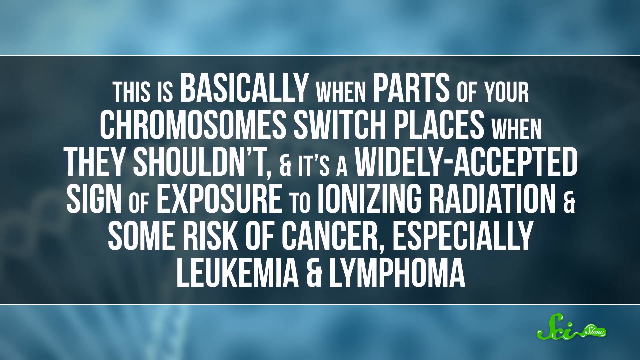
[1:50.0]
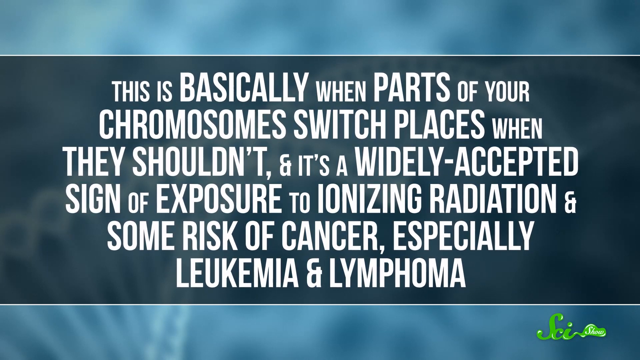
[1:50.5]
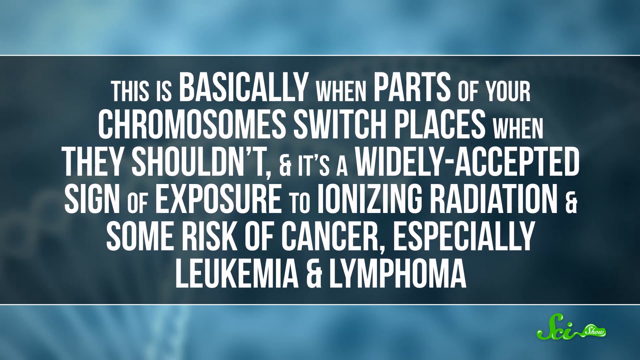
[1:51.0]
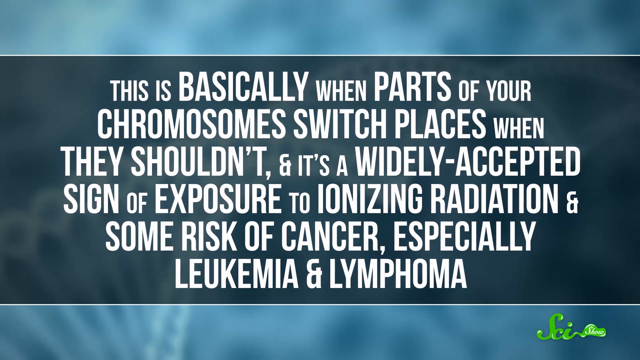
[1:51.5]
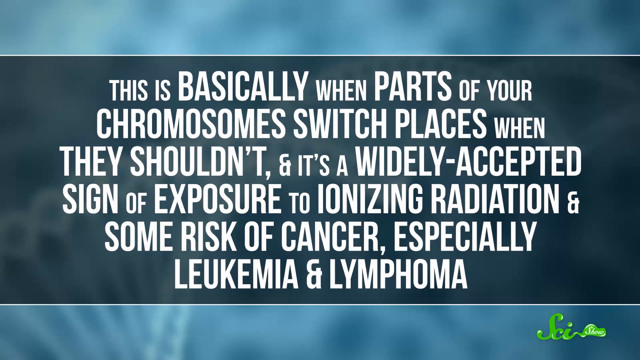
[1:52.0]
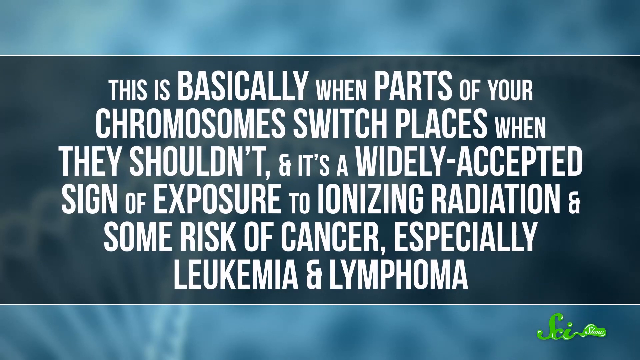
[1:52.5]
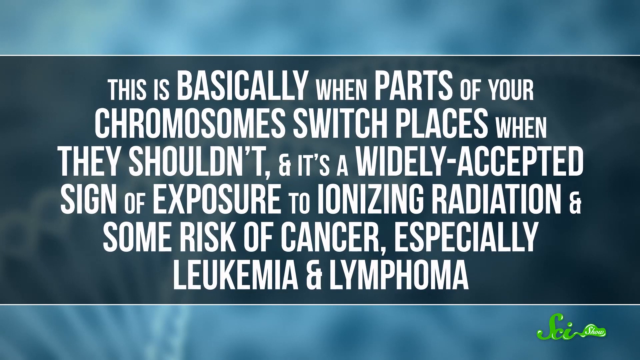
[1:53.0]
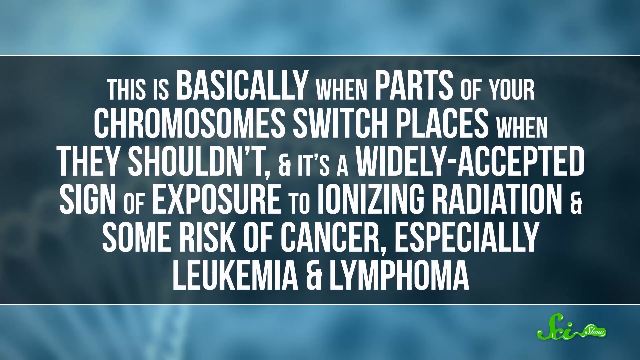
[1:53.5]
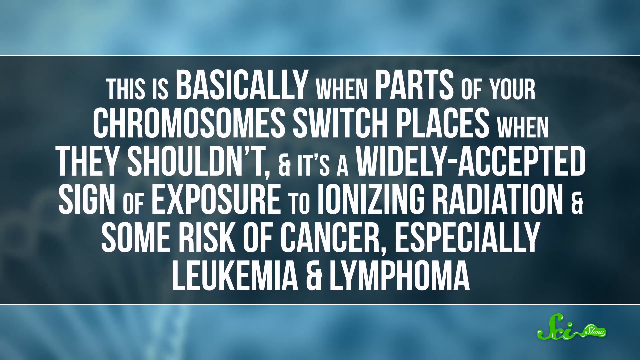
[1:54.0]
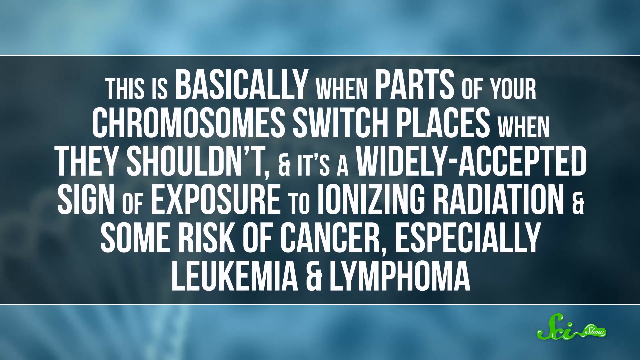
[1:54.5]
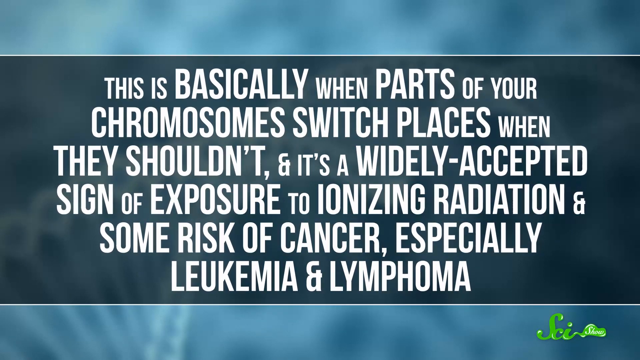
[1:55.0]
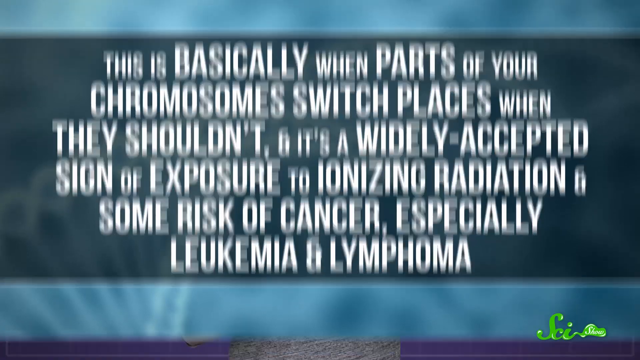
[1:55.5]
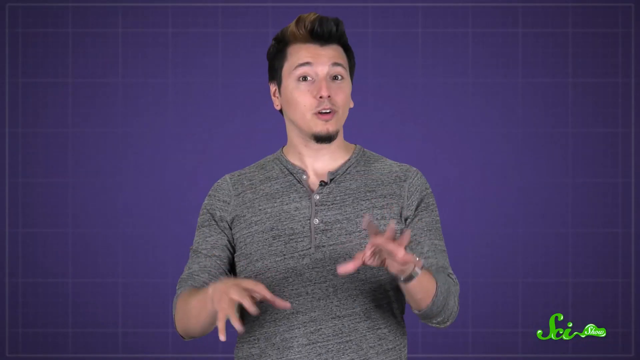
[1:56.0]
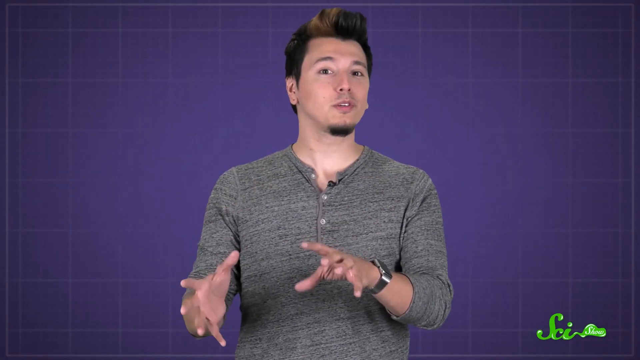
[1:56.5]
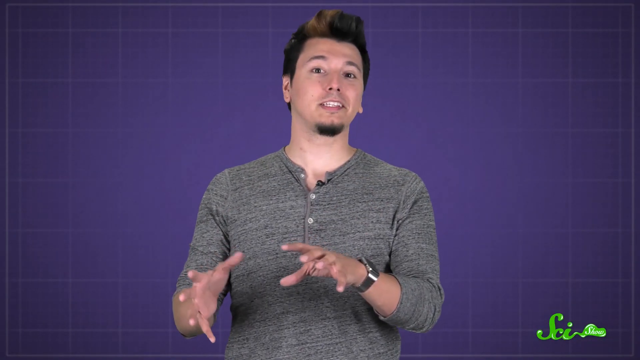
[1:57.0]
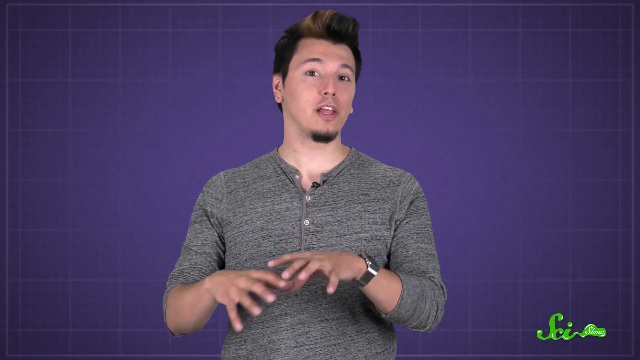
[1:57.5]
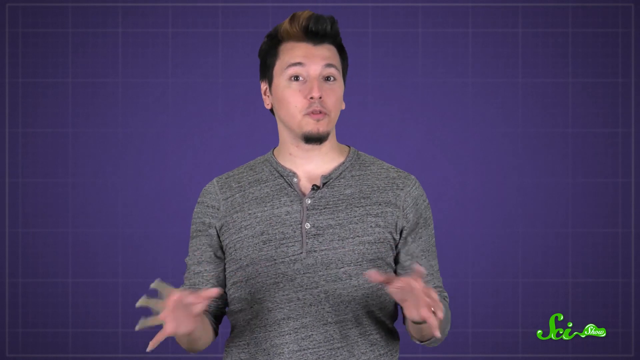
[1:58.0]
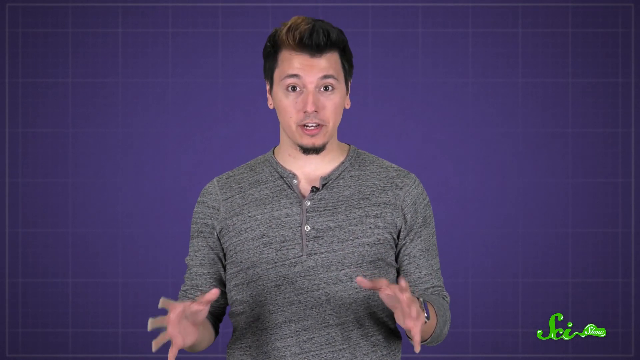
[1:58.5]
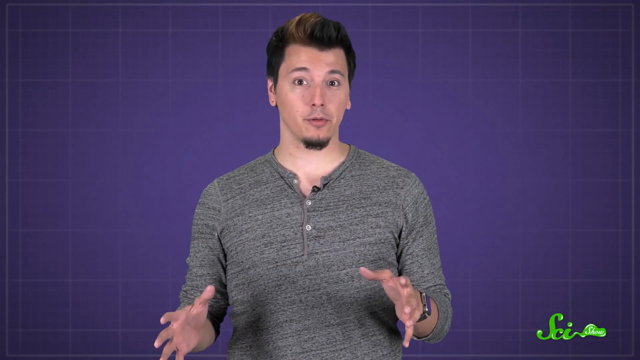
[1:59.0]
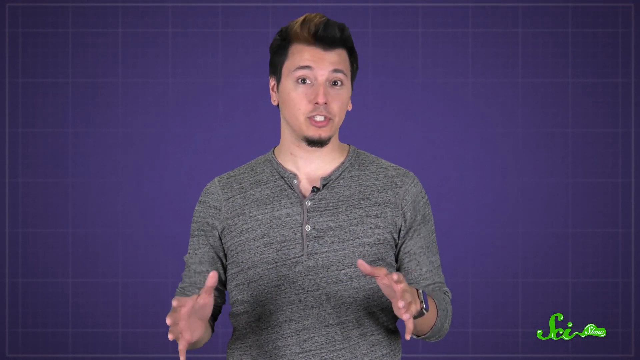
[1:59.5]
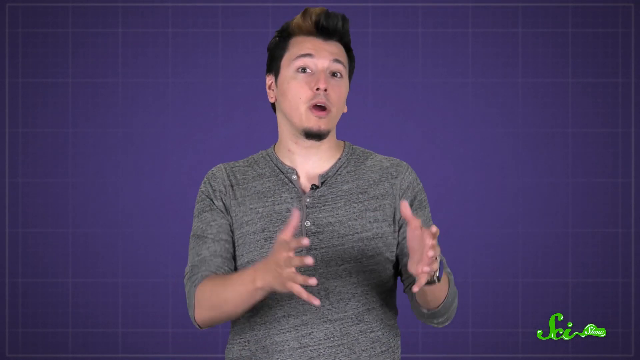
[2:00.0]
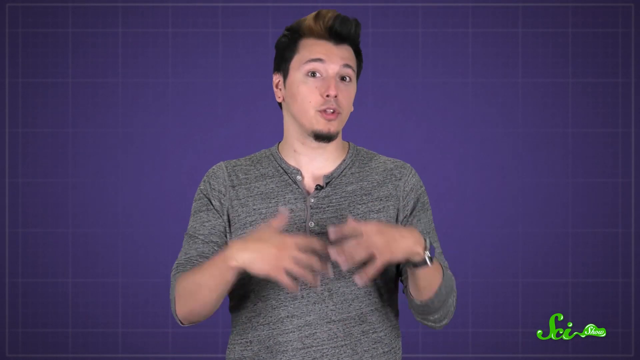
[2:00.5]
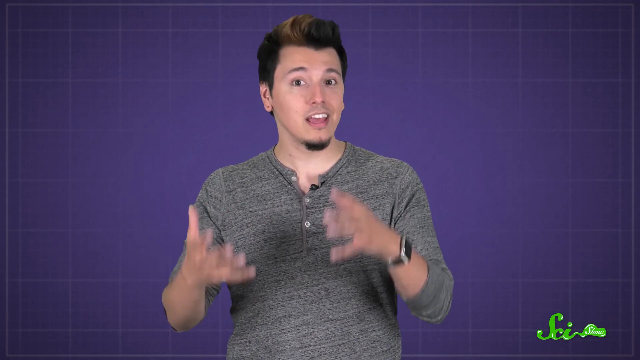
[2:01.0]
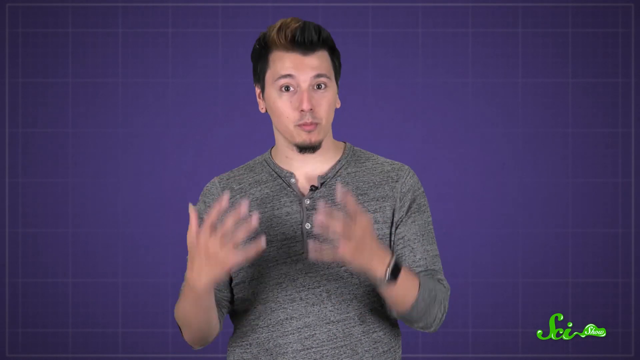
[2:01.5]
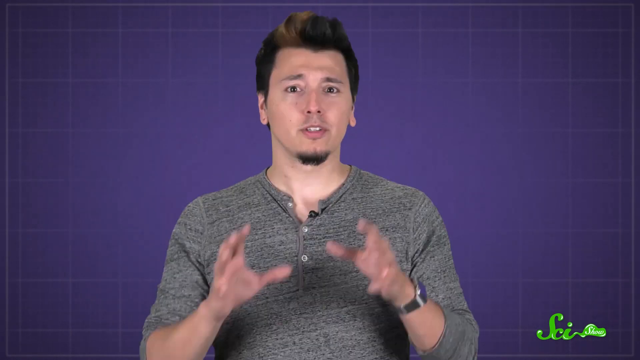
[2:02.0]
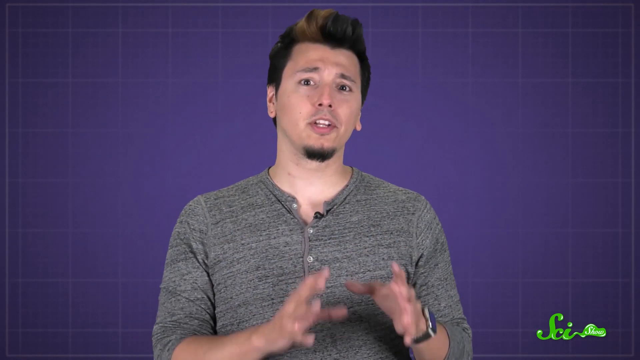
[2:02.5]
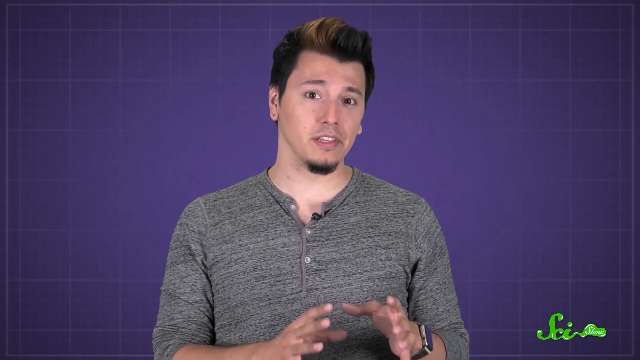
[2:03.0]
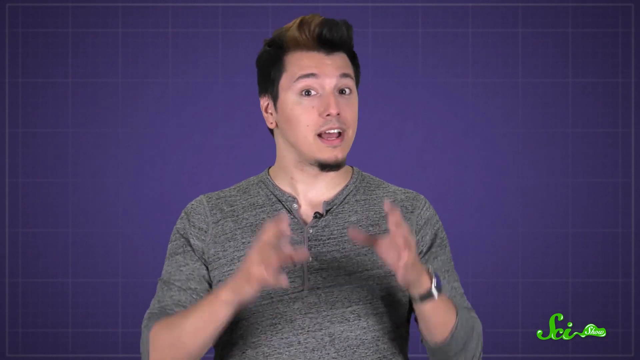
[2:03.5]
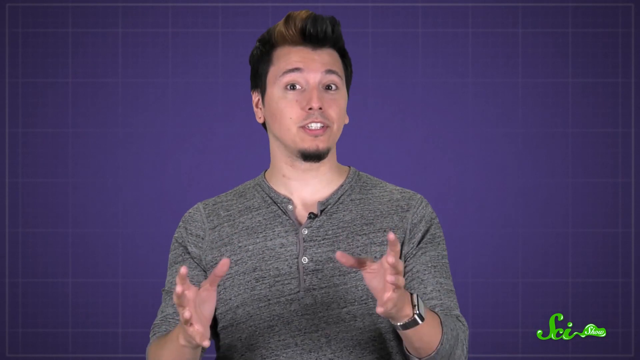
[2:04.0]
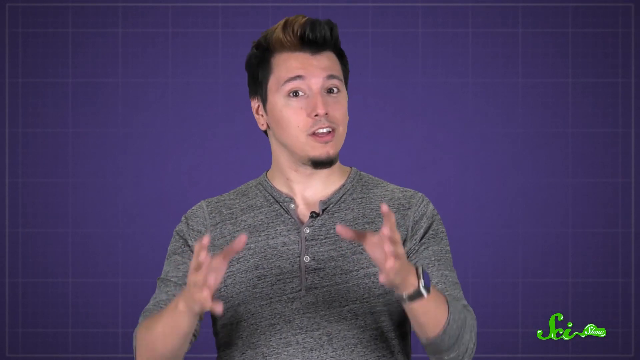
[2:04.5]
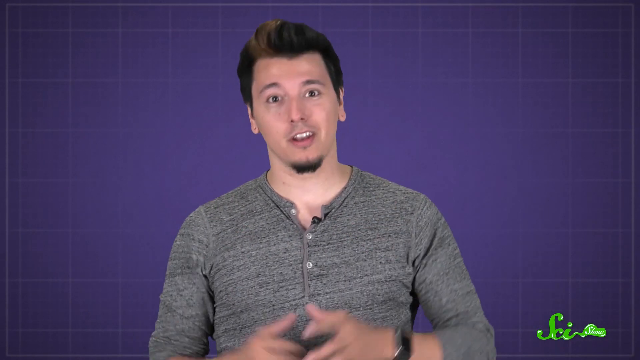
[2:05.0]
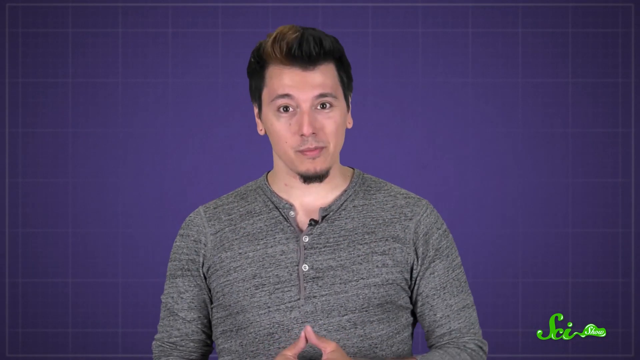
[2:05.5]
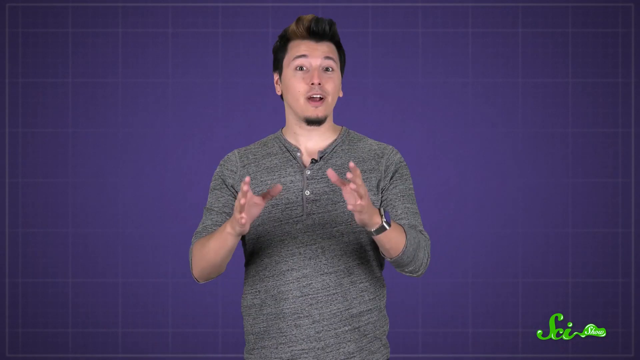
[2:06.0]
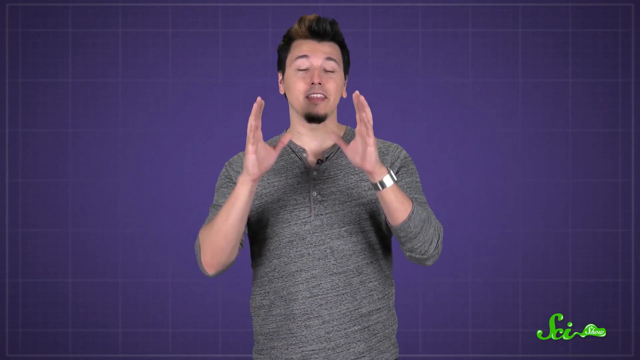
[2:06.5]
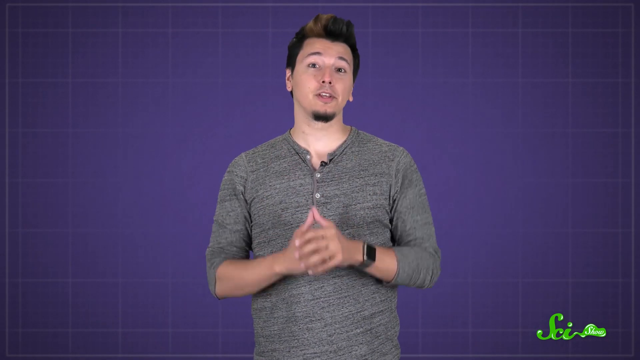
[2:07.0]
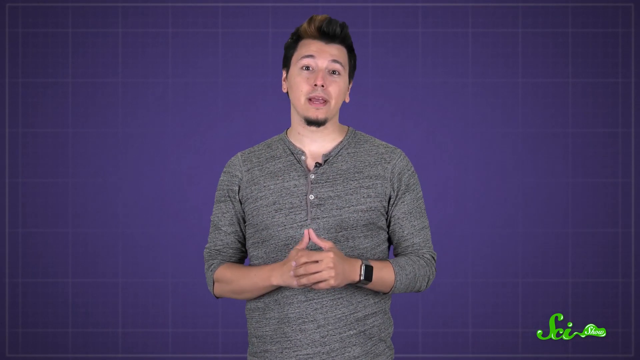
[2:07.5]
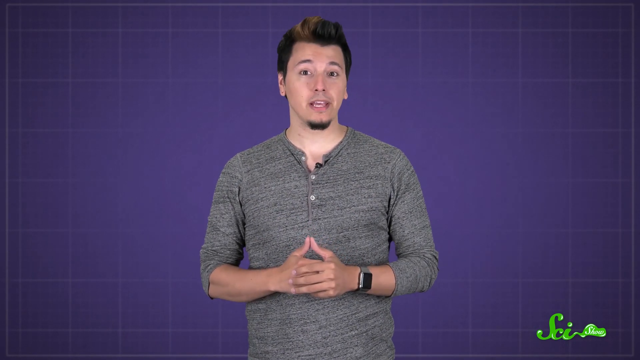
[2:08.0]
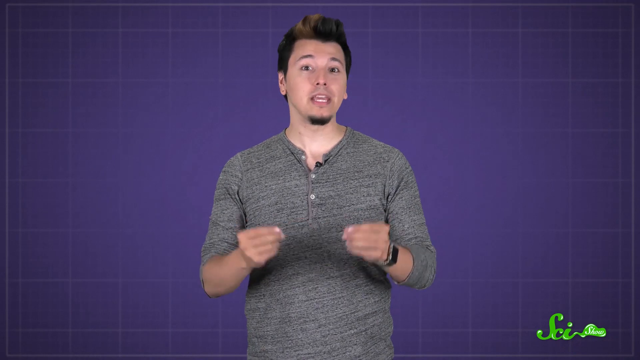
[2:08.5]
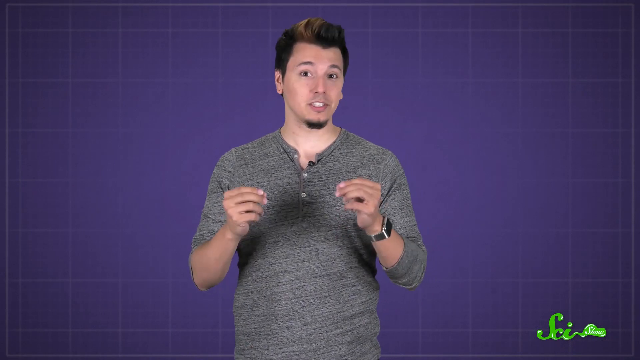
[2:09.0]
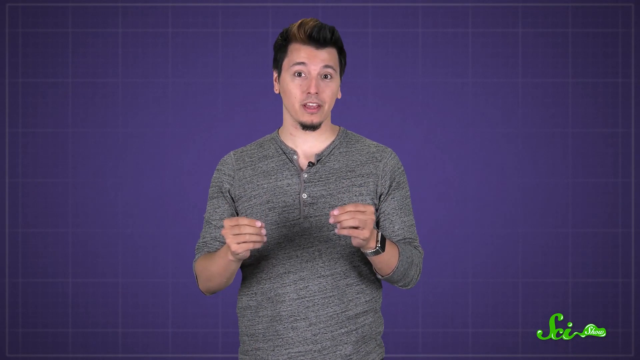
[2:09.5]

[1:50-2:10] The text about pilots' chromosomes and the risk of cancer, especially leukemia and lymphoma, is on screen and quickly moves off, returning to the narrator. He is at times seen a little farther away, and sometimes the camera zooms in on him. His hands are up in front of his chest, moving together as he speaks, and at times he touches his fingertips together. He always looks directly into the camera, his head sometimes tilting slightly backwards and sometimes leaning forward. The black watch on his left wrist is always in view.